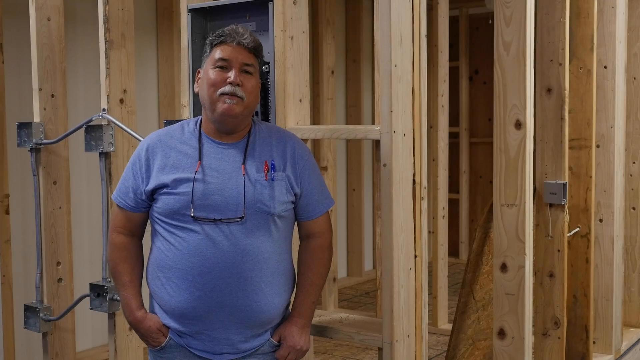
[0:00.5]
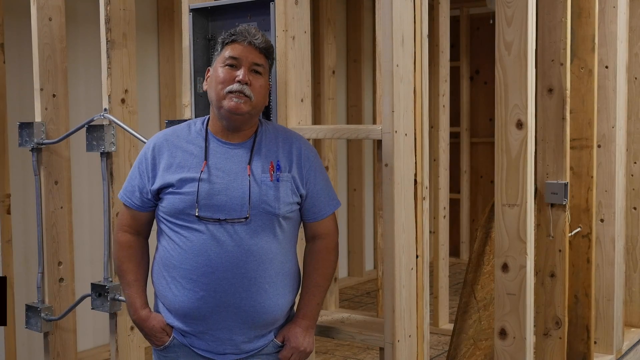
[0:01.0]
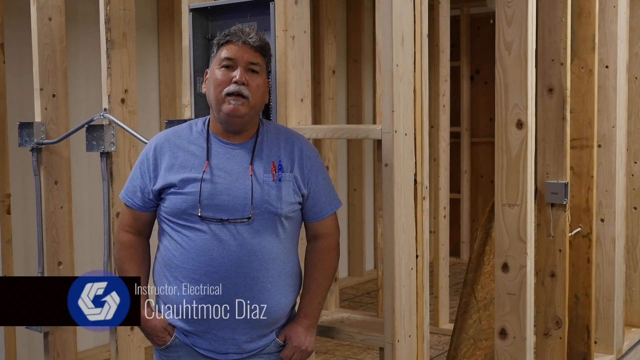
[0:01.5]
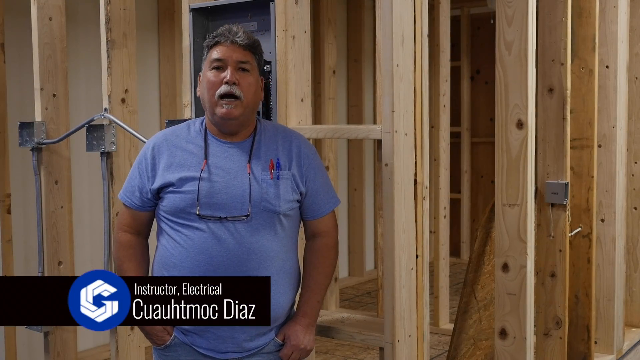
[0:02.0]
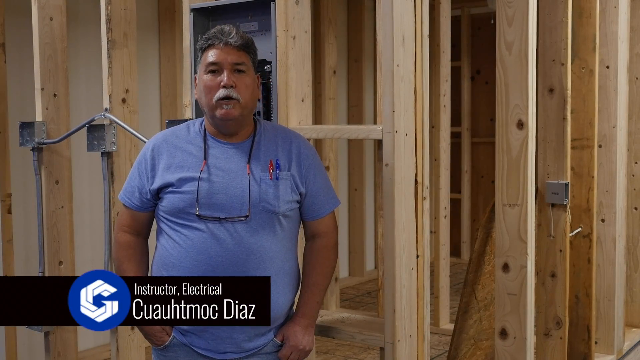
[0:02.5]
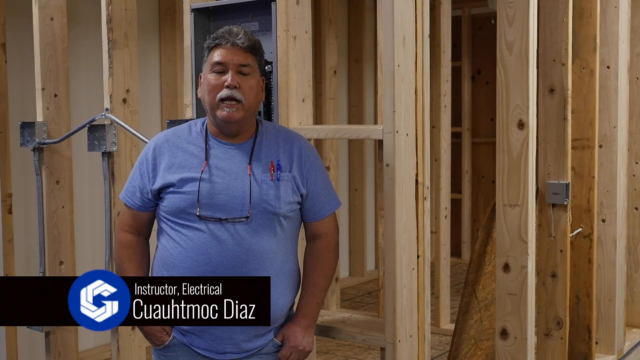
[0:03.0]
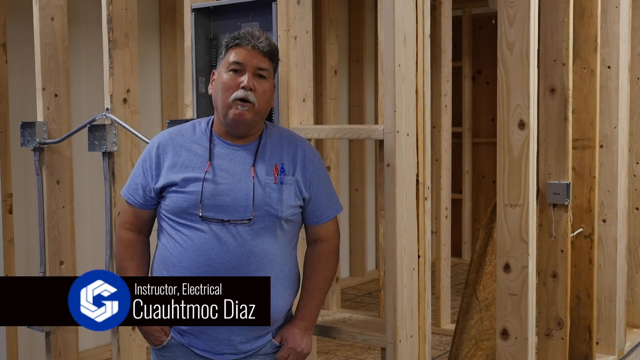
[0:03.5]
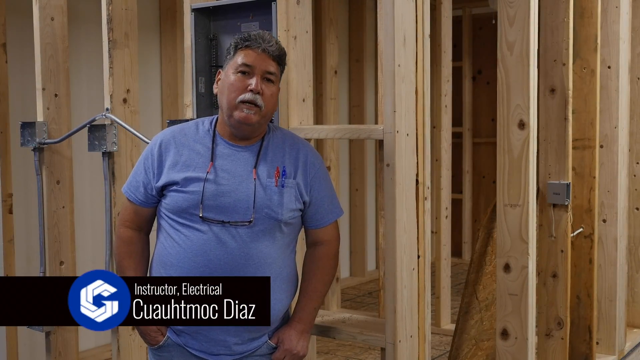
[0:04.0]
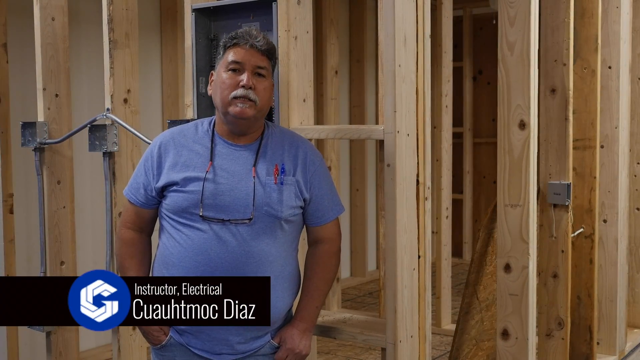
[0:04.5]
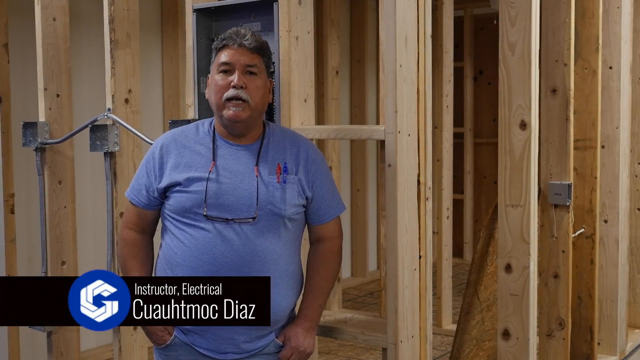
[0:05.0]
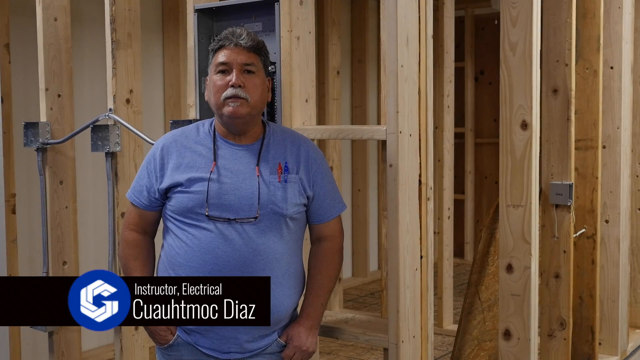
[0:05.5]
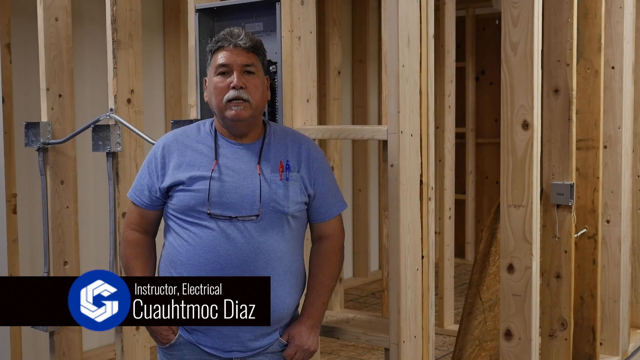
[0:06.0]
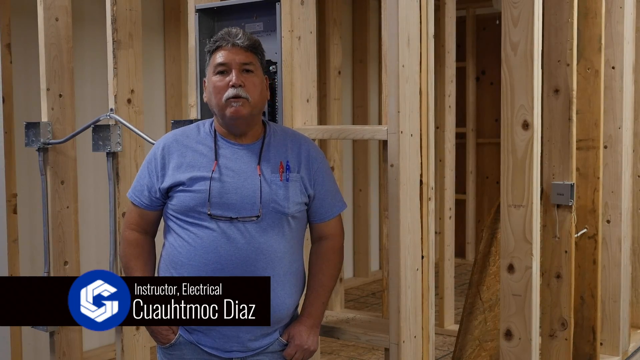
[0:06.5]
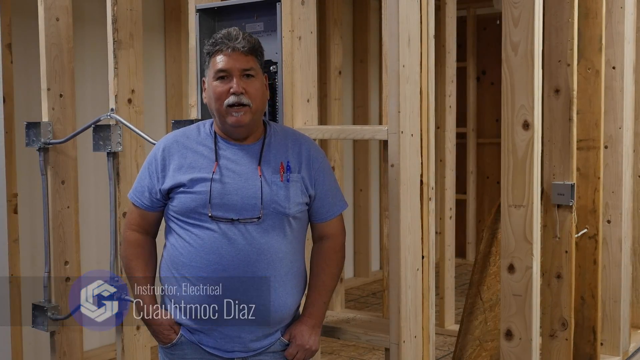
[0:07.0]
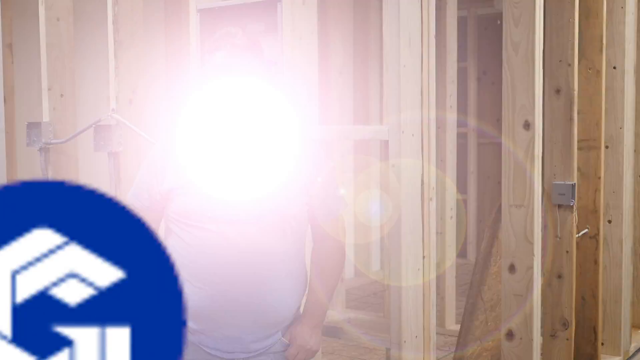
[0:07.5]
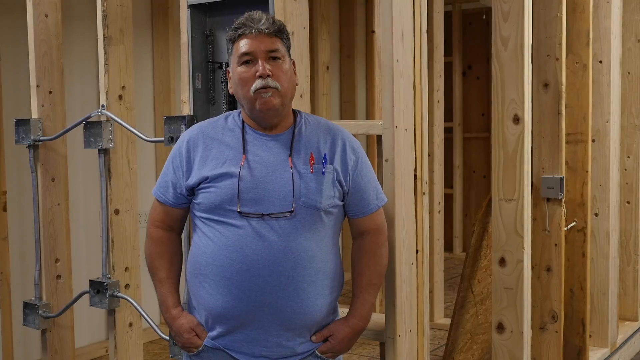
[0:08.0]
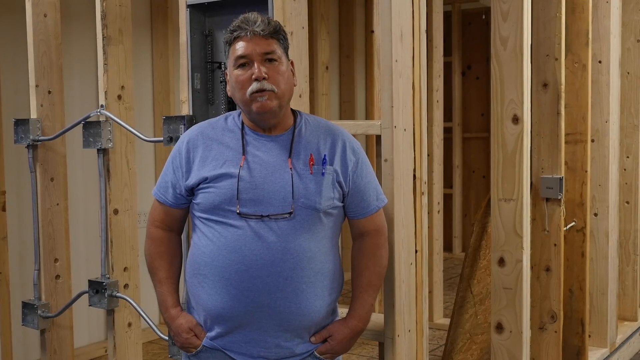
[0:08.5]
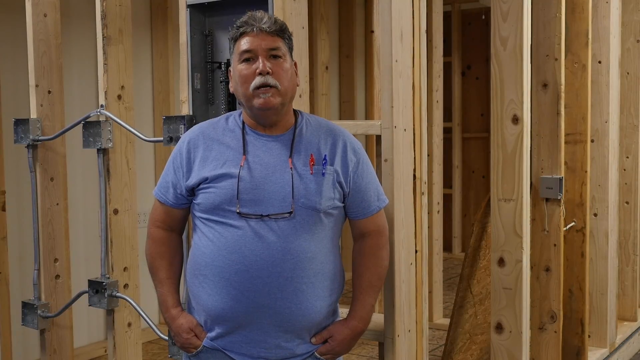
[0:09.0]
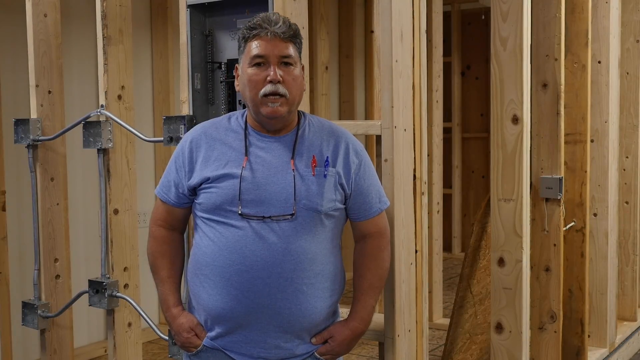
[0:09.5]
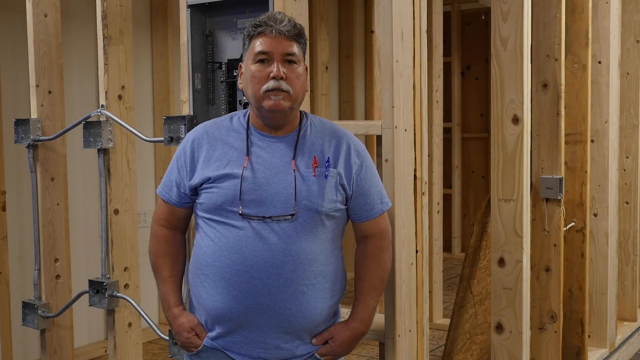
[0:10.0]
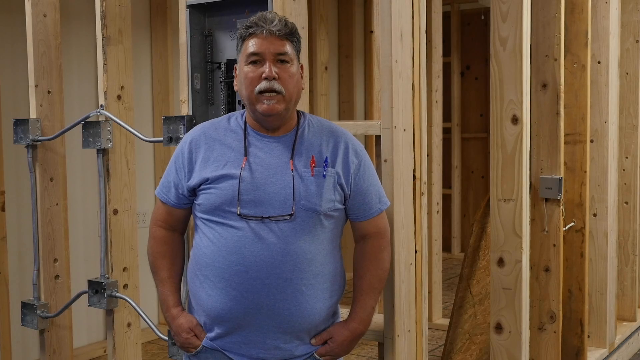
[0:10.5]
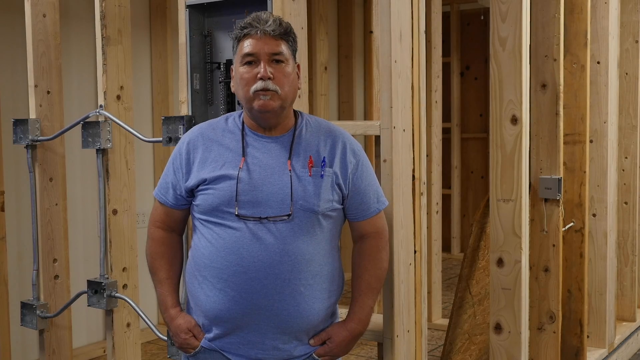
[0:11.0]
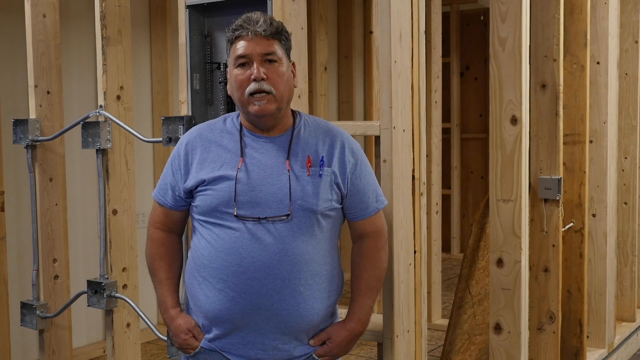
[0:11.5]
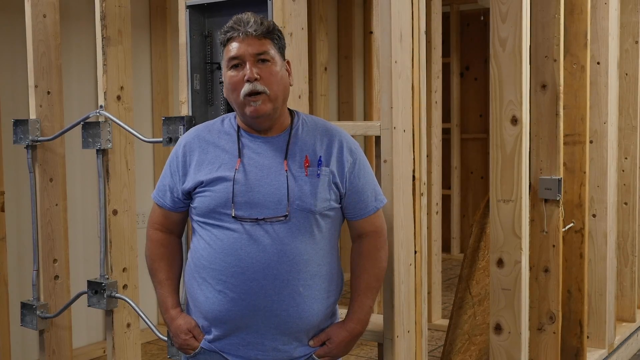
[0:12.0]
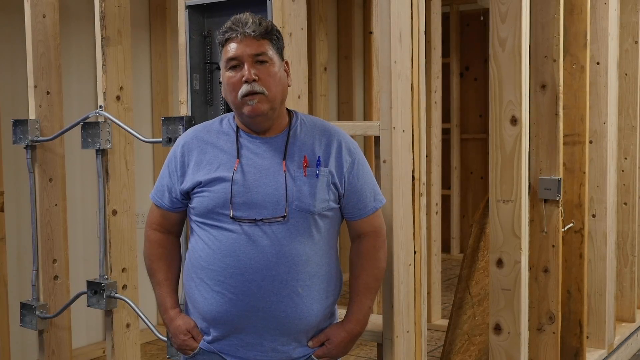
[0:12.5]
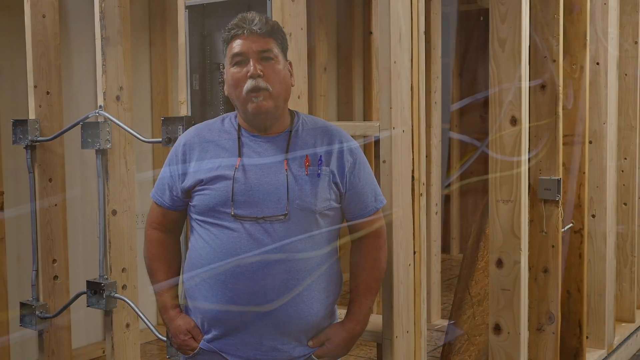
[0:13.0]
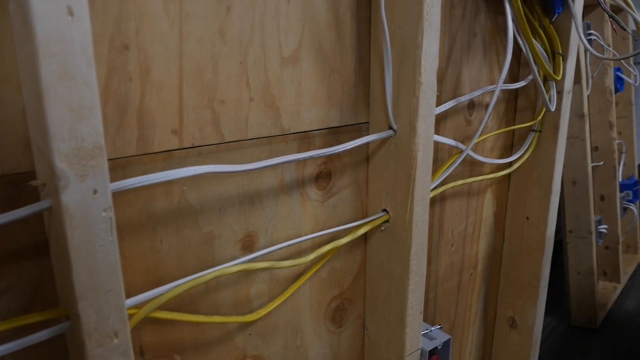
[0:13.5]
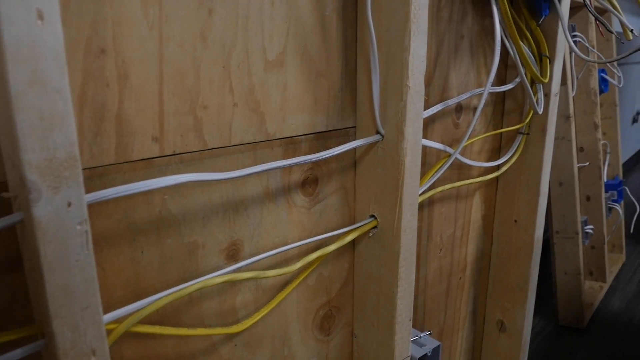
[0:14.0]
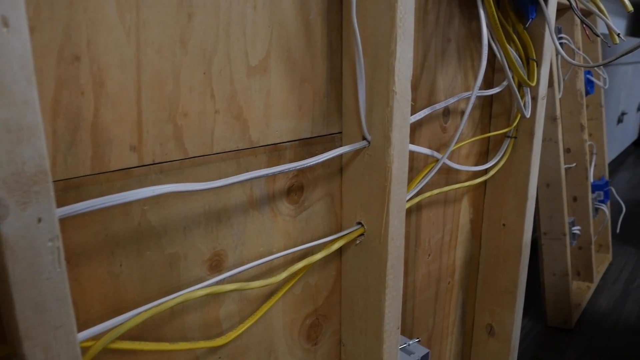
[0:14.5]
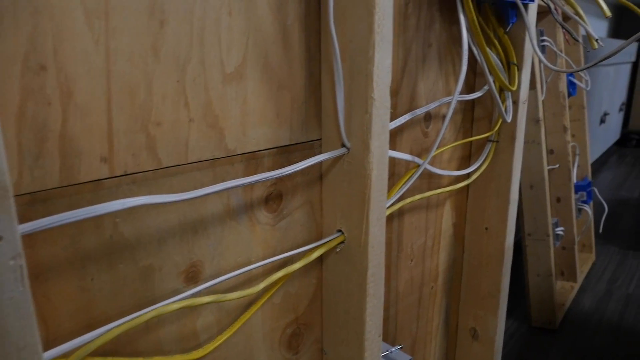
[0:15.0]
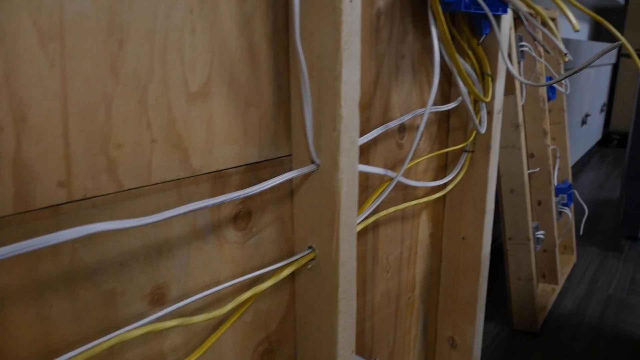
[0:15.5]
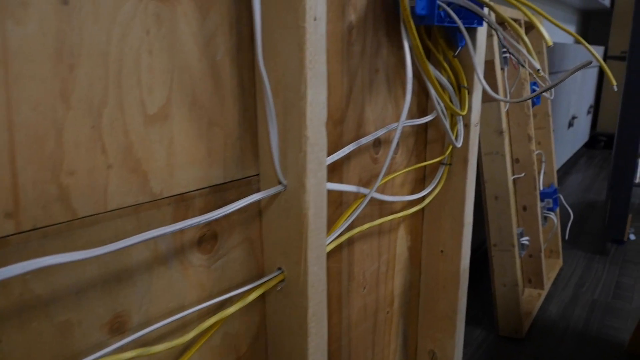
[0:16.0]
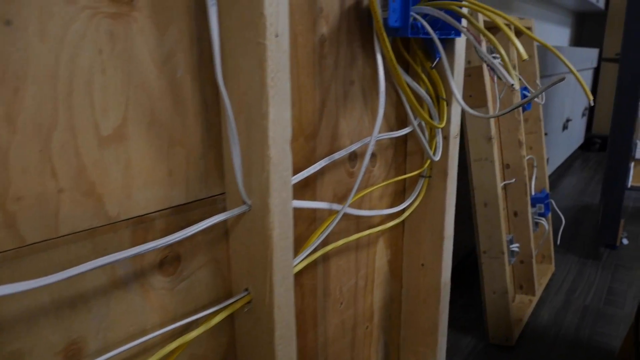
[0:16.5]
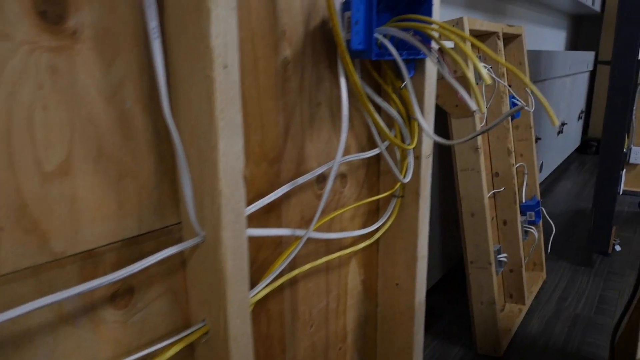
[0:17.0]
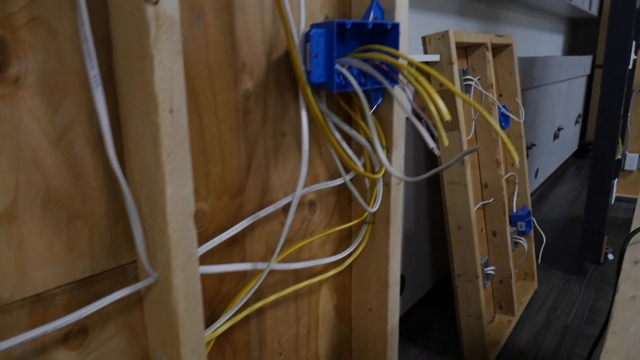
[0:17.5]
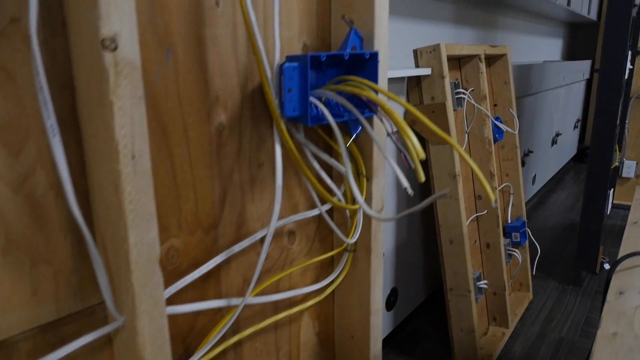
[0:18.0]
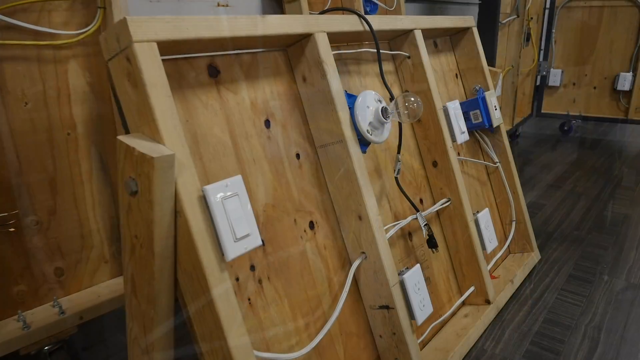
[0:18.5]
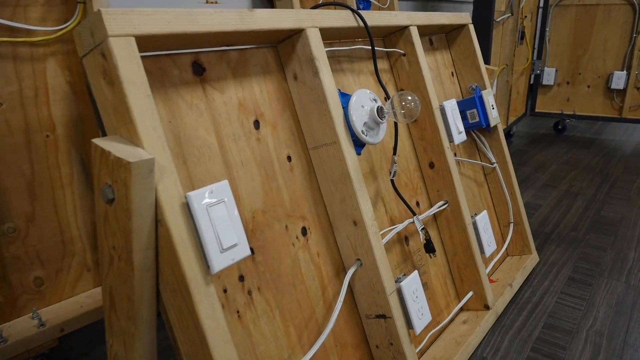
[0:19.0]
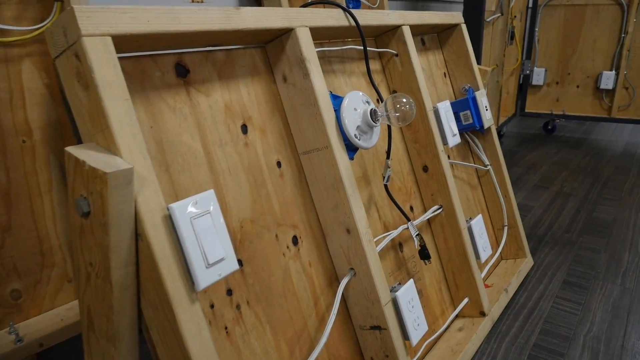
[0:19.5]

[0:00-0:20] An aged man with a white beard, wearing a blue T-shirt and something around his neck, stands in front of the camera with his hand in his pocket. His mouth moves as he appears to describe something. The camera then focuses on the setting behind him: the house is made of wood, with timber poles behind him and electrical wiring. The setup seems to be a learning station with cables running through the room. As the camera pans through the room, cables run through the wooden wall, and there is a switch on a board with wires connected to it. The setup is all about wiring.